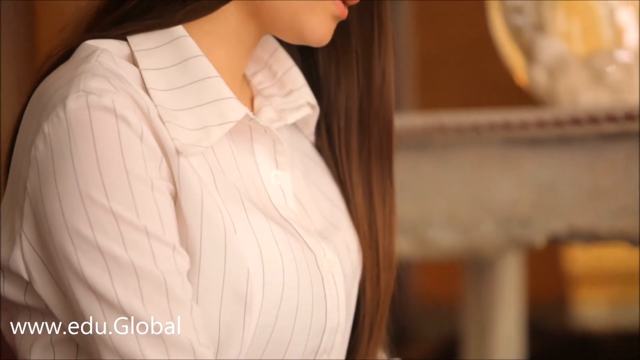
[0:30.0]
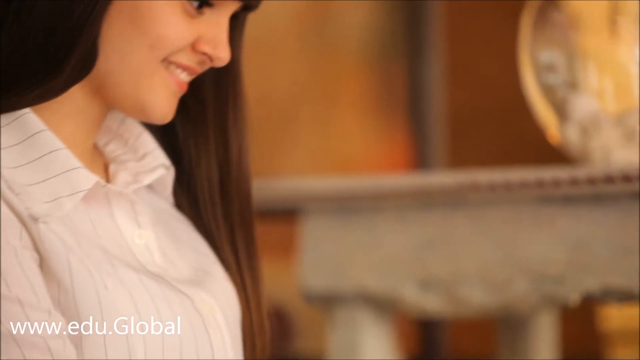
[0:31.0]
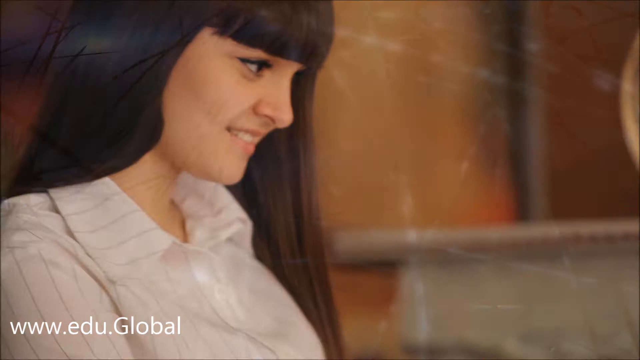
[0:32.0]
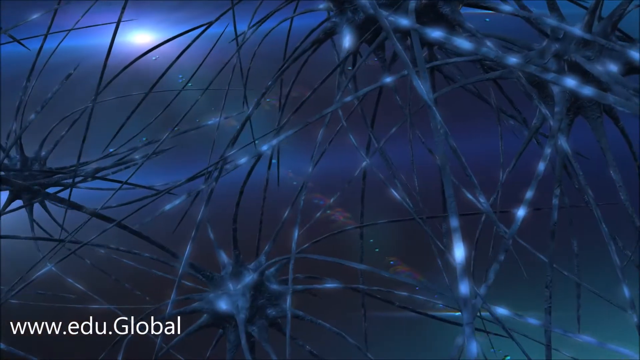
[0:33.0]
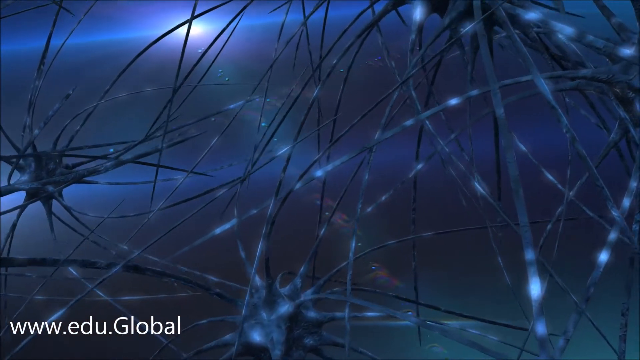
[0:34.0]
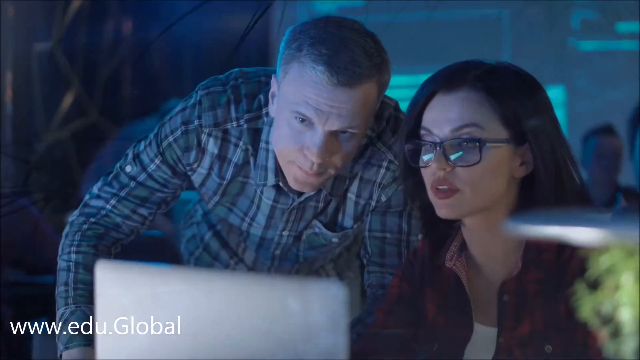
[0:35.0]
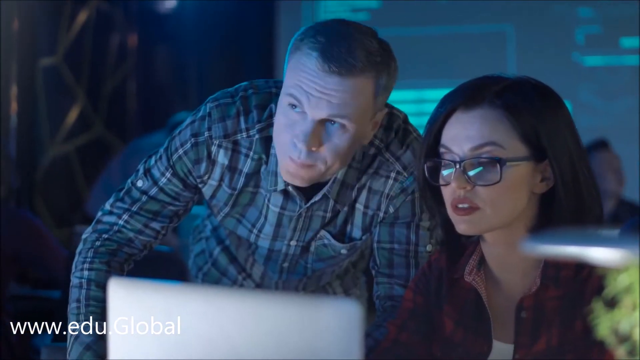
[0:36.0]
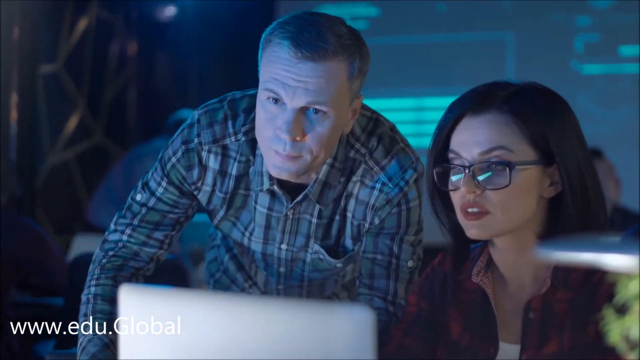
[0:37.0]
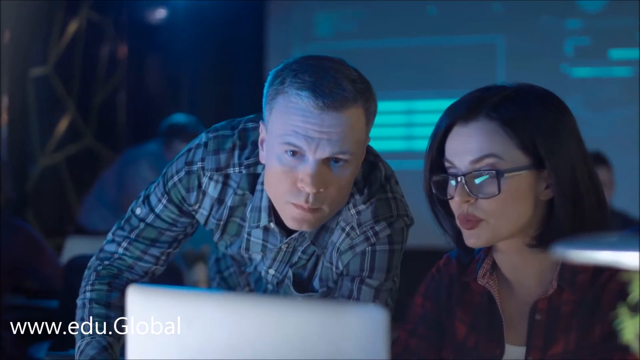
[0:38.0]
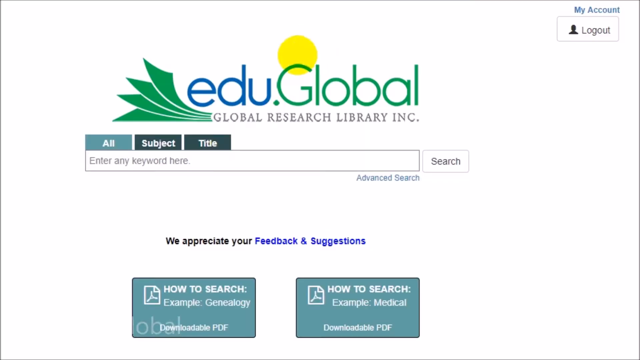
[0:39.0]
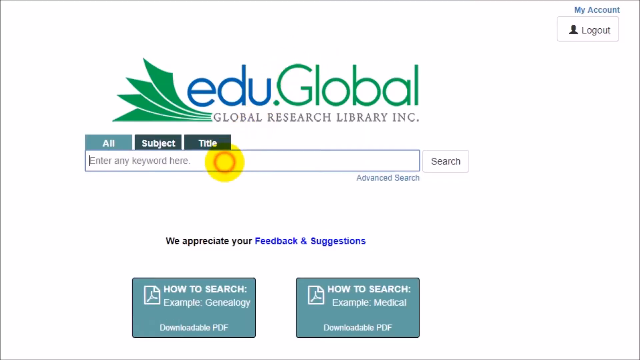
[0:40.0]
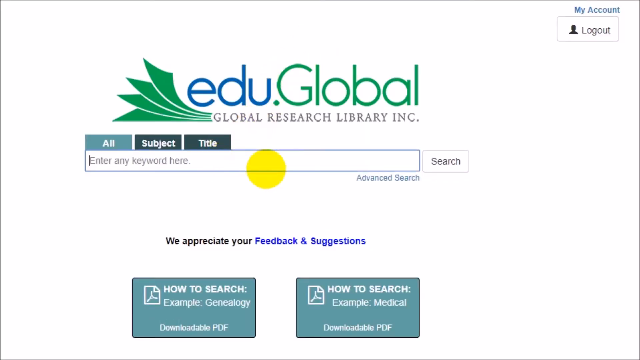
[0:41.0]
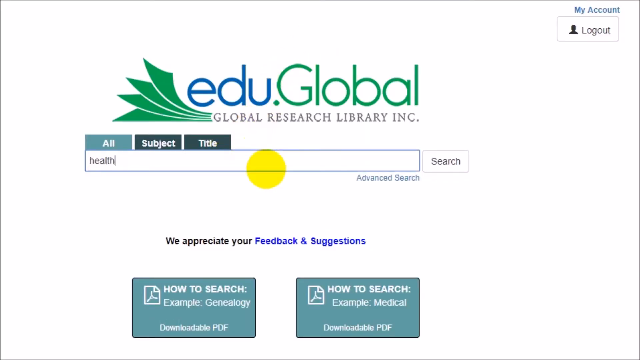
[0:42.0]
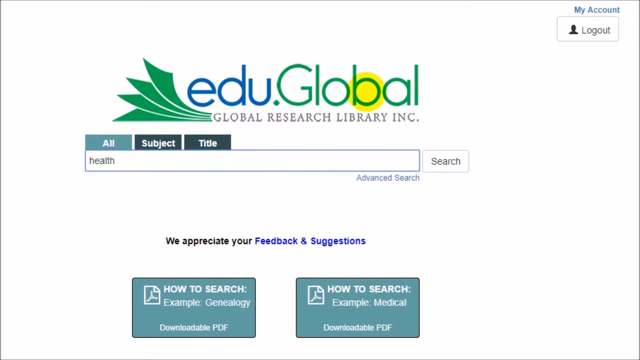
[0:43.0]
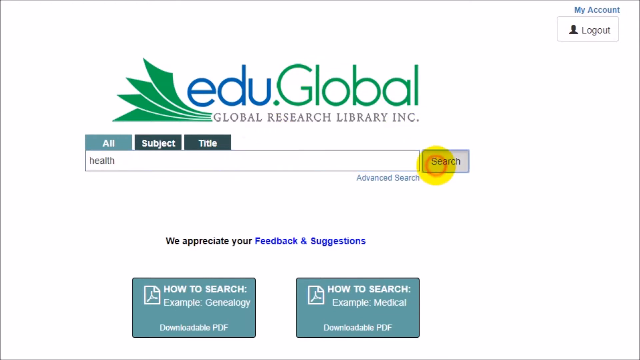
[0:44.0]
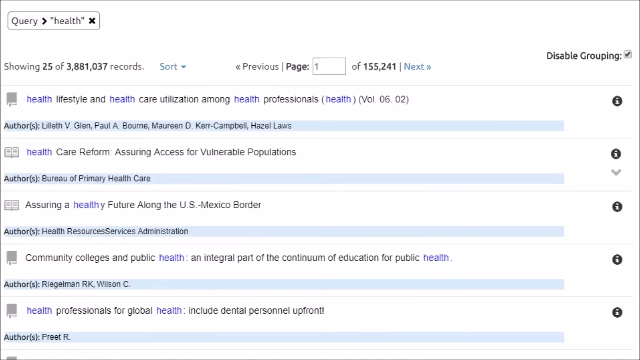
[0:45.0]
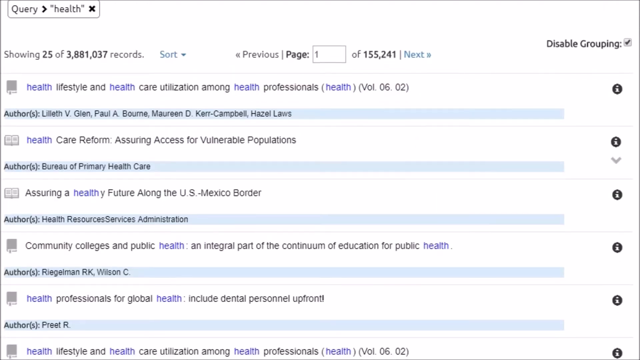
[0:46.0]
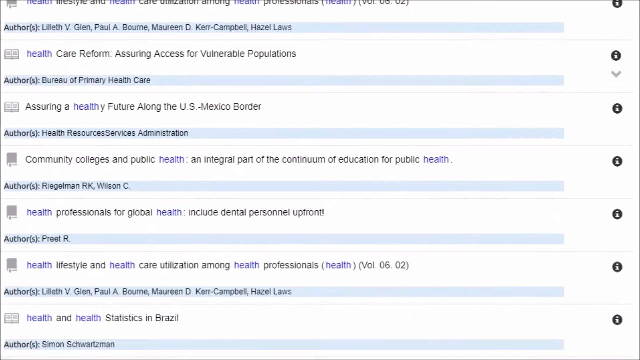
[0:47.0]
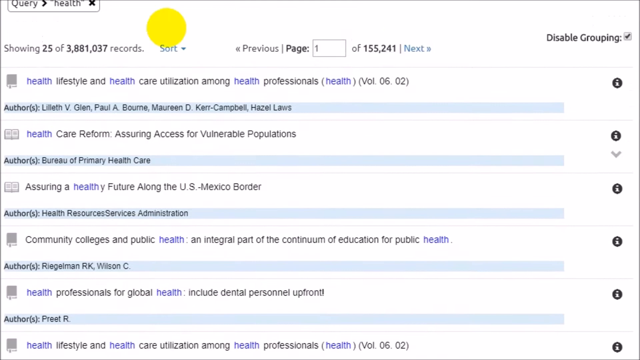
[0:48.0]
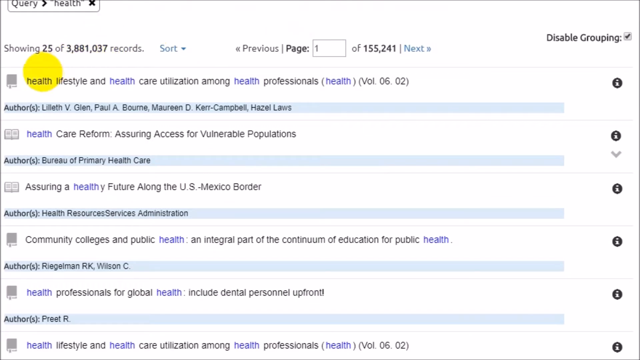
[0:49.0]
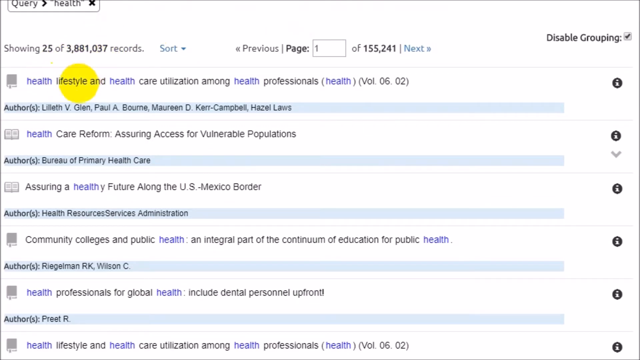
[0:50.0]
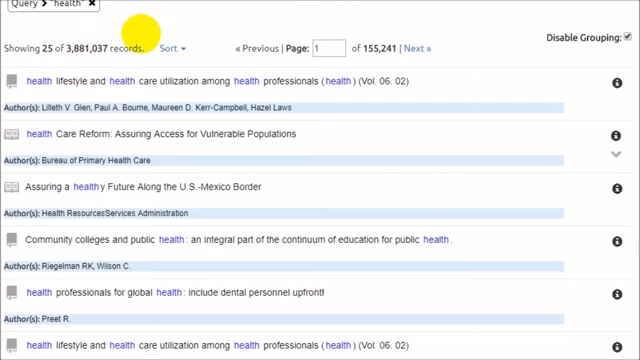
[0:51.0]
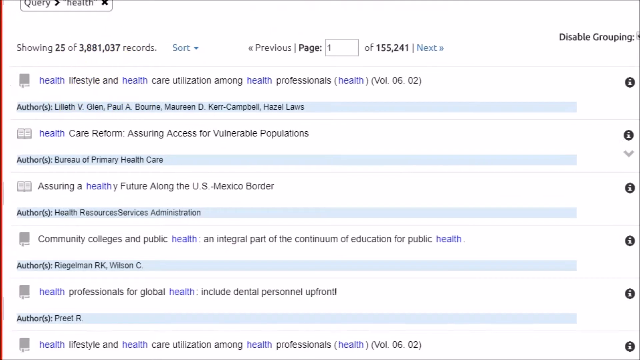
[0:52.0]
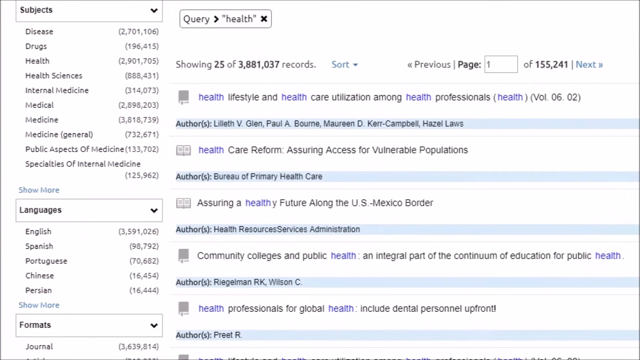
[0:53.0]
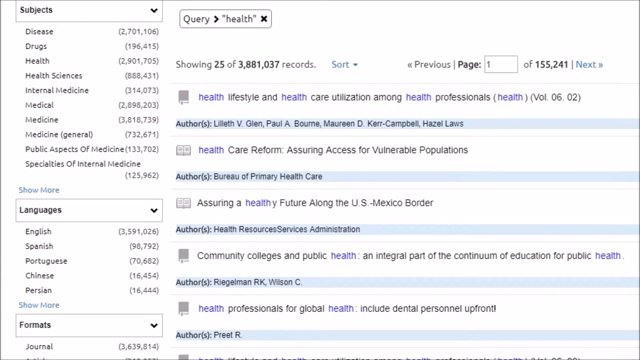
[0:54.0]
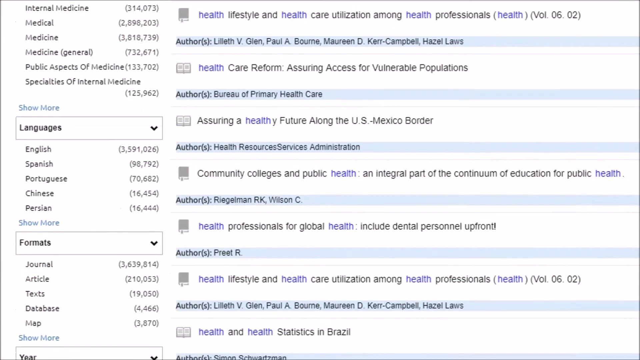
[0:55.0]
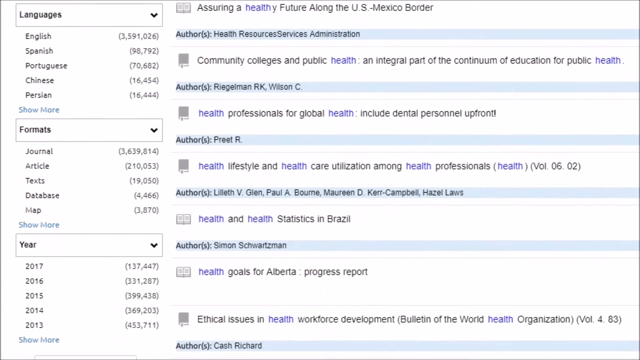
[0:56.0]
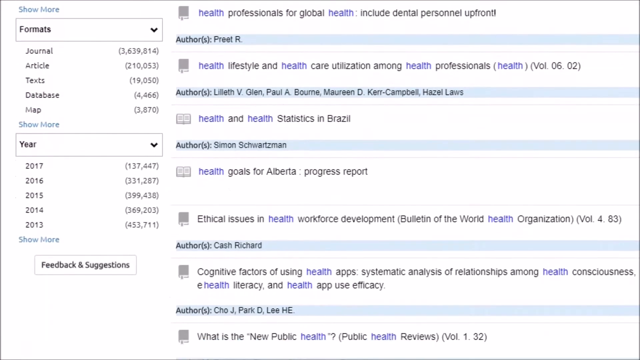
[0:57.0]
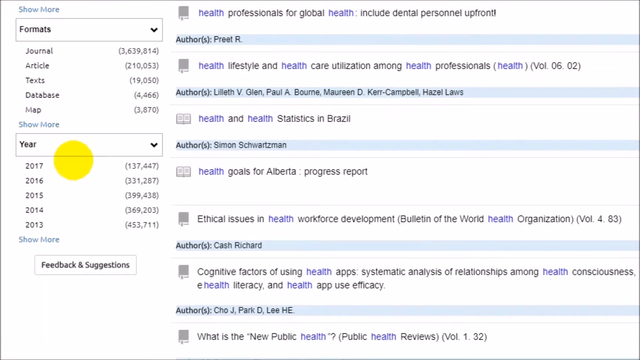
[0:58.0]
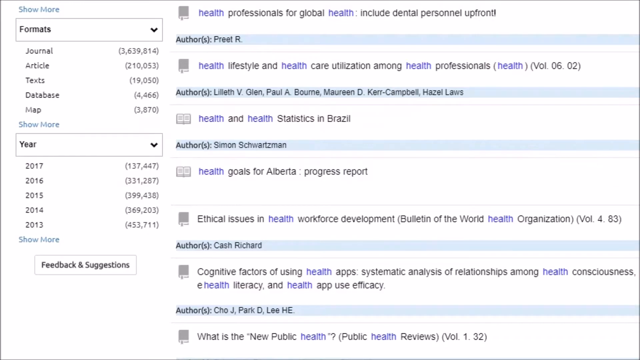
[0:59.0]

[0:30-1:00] More short films and images related to bookstores and reading follow. The woman working on her laptop smiles at the camera. A somewhat strange transition shows neural networks floating in space. For a second a man and a woman appear: the woman sits in front of a laptop while the man crouches, watching the screen as the woman explains something. The edu.global page then fills the full screen, where the word "health" is typed into a search engine under the category "all". Search is clicked, and results appear that may be books and articles, with keywords, titles containing the keyword, or quotes using those words. On the left are several ways to filter the information: by genre, such as drugs or medicine; by the language it is written in, such as English, Spanish or Portuguese; and by year of publication, such as 2017 and 2018.